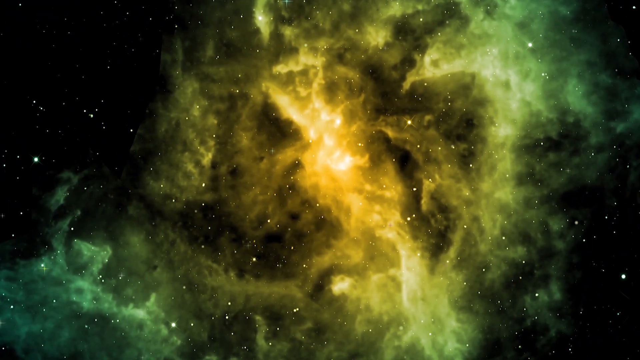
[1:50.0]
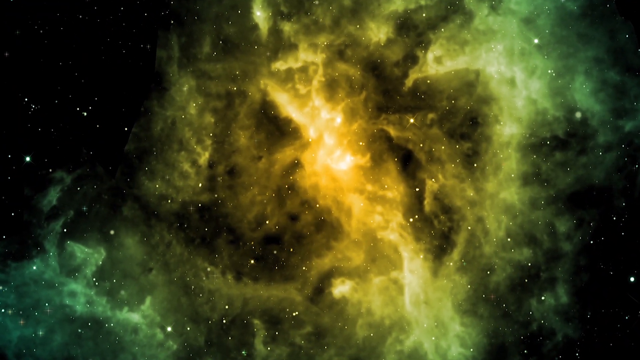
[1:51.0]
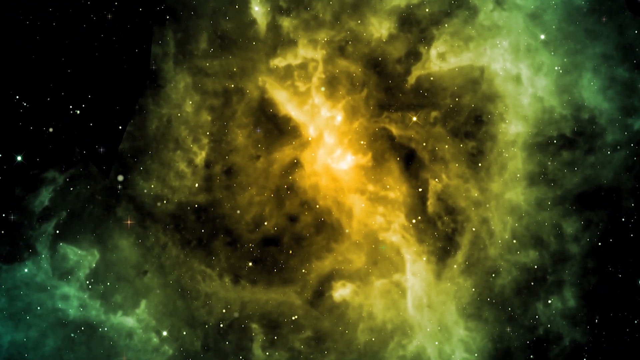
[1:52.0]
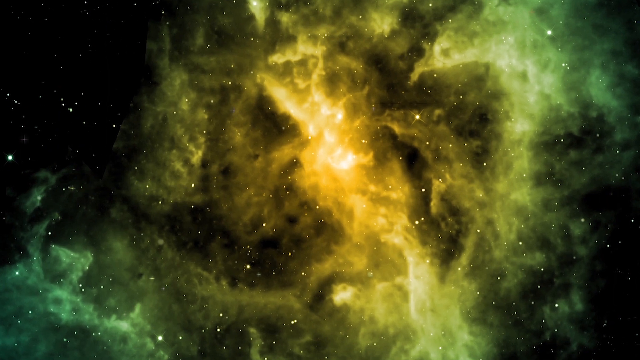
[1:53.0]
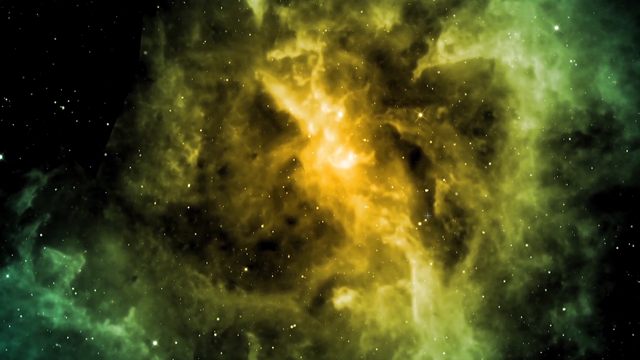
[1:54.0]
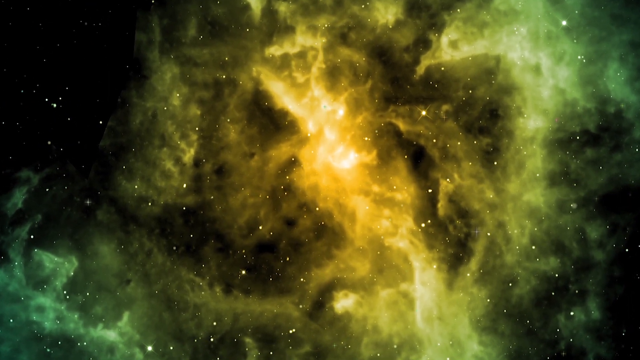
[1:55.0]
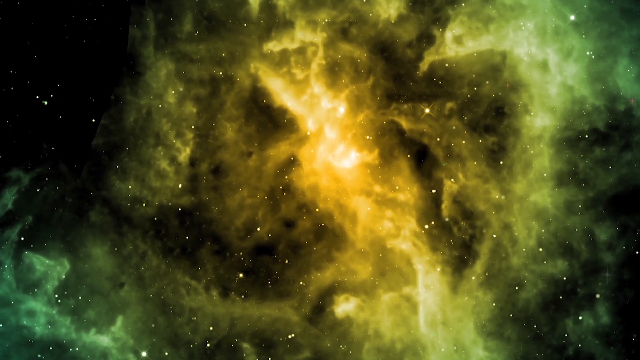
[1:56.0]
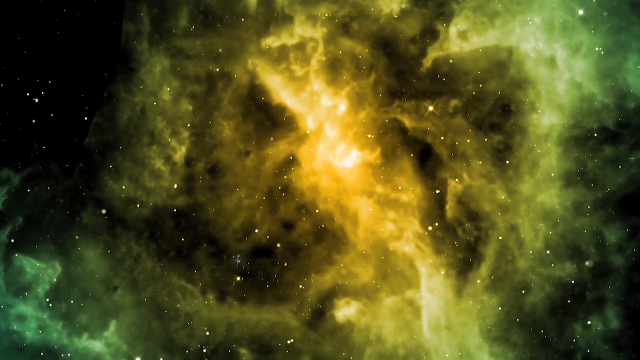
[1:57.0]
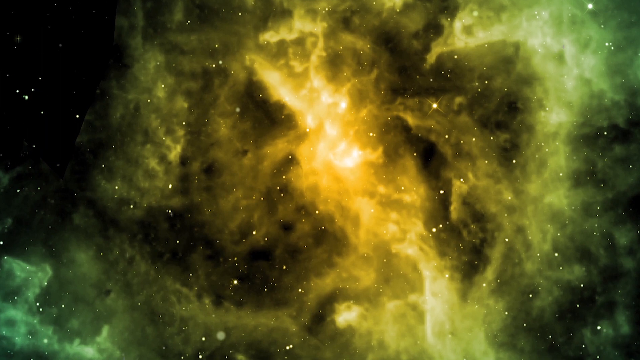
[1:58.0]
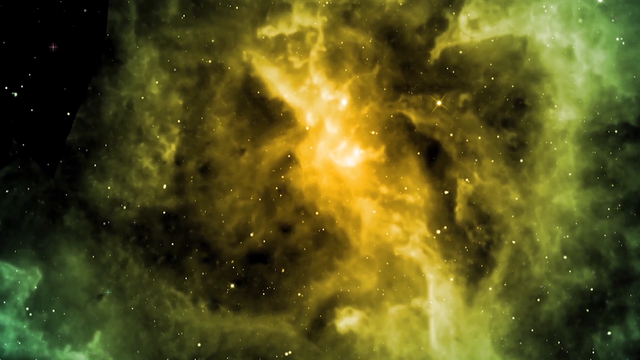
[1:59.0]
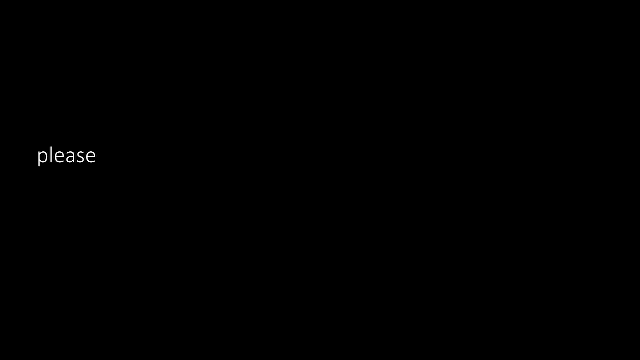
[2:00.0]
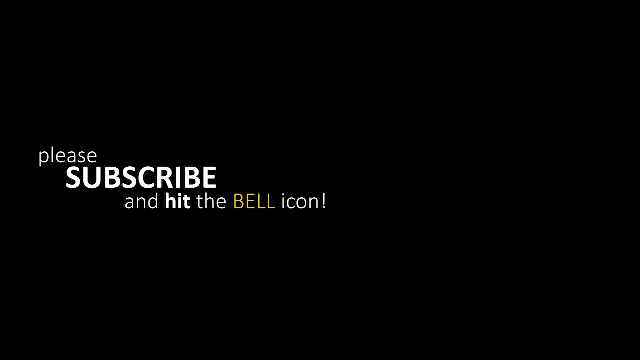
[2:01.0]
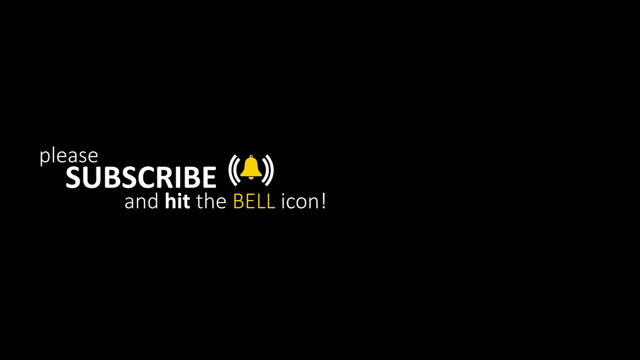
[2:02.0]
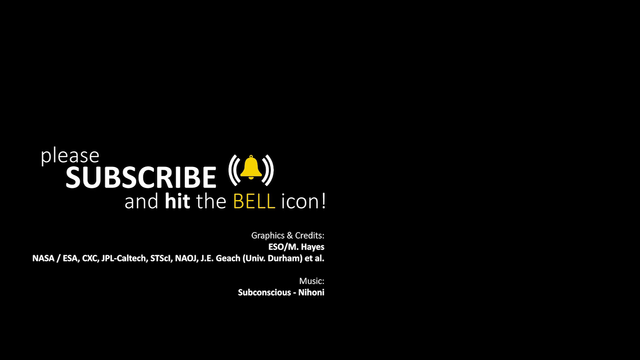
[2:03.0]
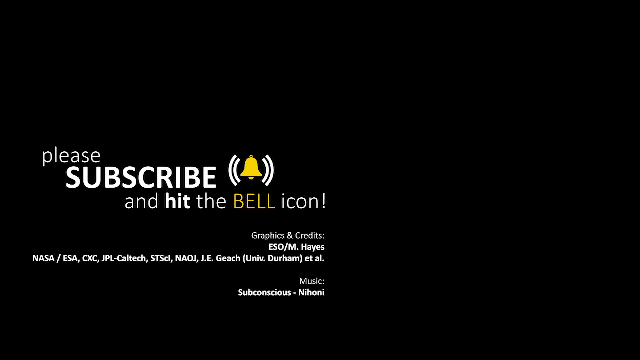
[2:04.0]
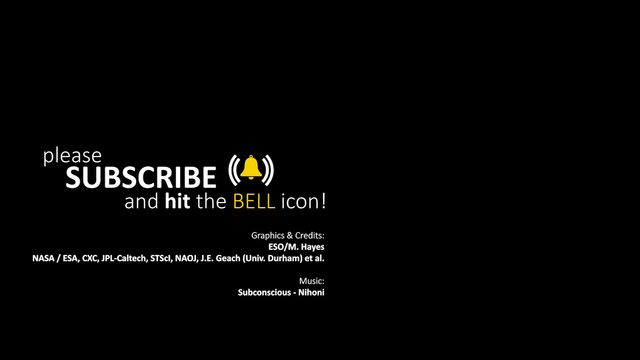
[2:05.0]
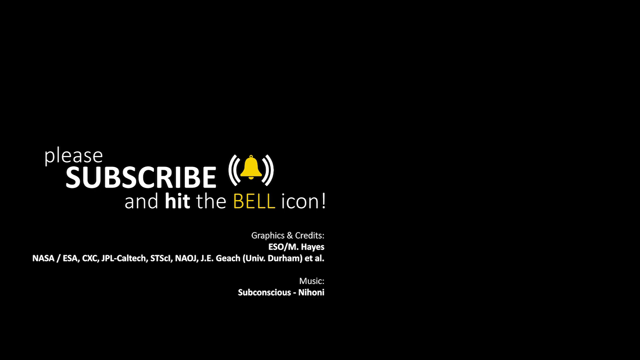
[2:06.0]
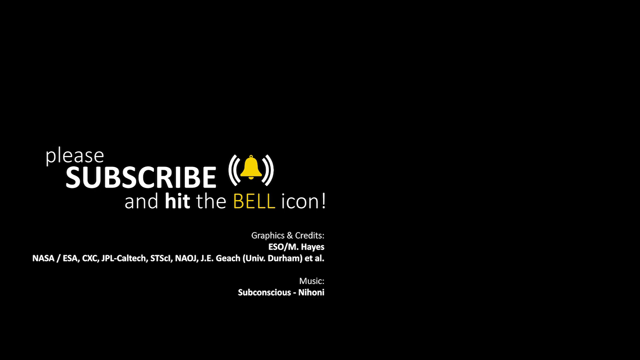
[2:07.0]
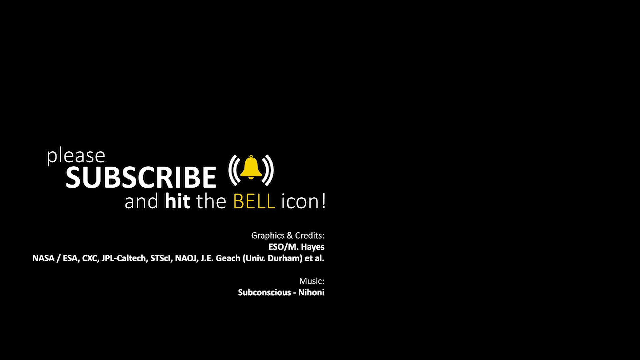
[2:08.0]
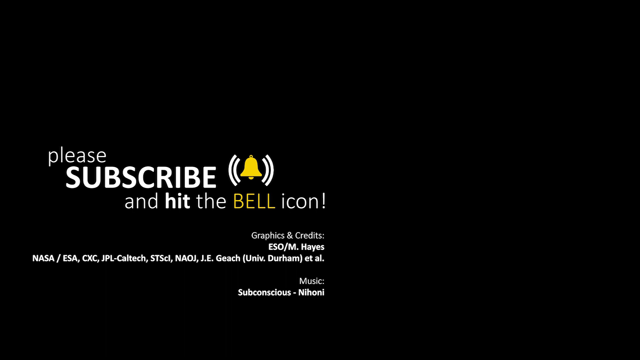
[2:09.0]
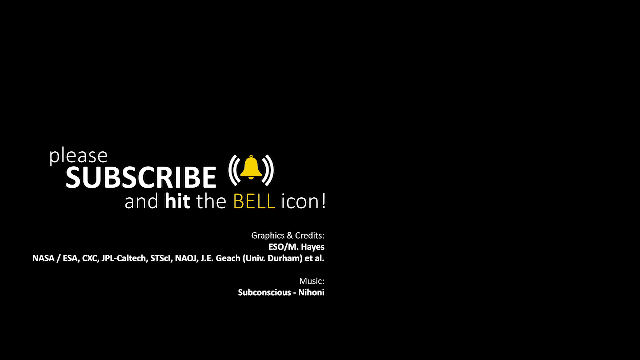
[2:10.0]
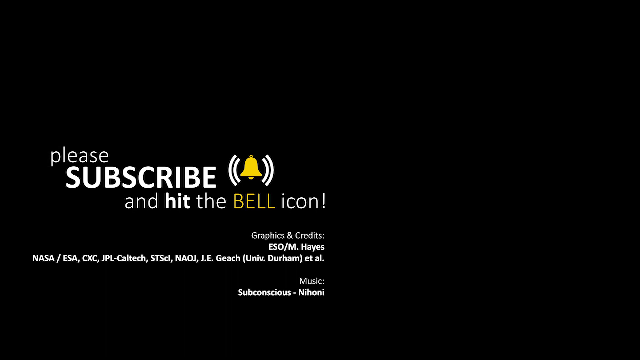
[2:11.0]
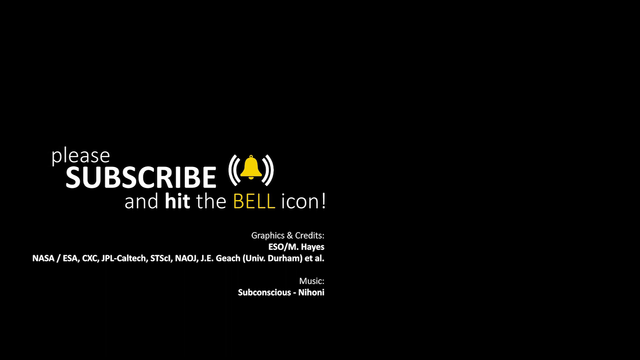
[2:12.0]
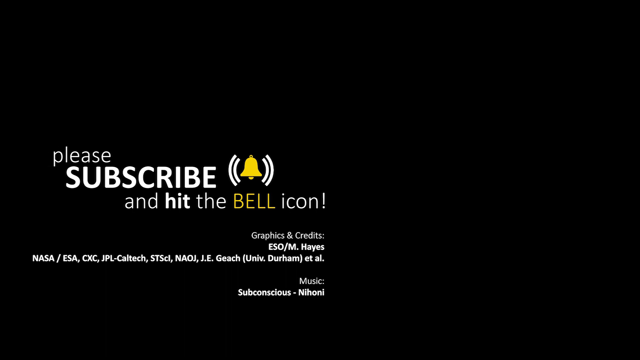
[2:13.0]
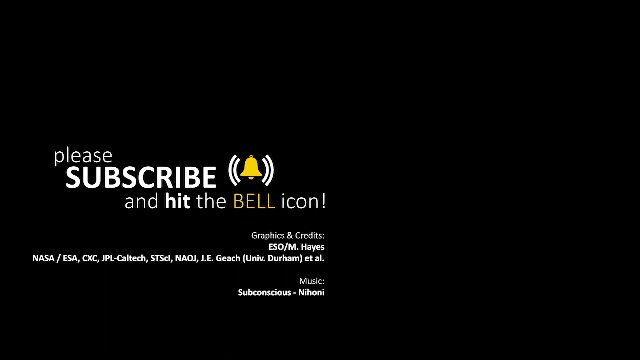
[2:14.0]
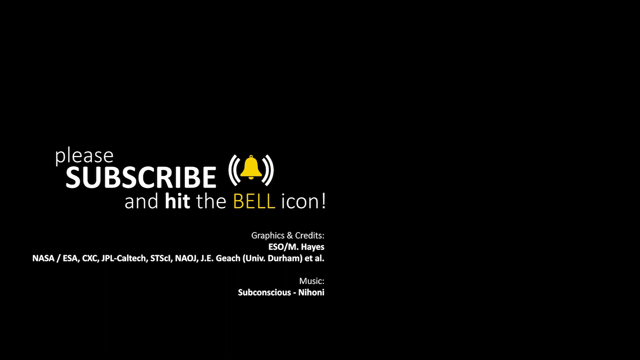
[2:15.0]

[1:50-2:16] The view flies through a yellow and green gaseous body, surrounded by almost turquoise, in the middle of a shot of a galaxy, with black space in front and an almost infinite number of white stars passing by. Then text appears reading "Please subscribe and hit the bell icon," with a drawing of a bell in two sets of parentheses next to it. In the bottom left corner of the black screen, credits read "Graphics and credits, ESO / MHaze, NASA / ESA, CXC, JPL-Caltech," continuing with further entries including "University Durham" and "et al.," followed by a music credit. At the very last second, the subscribe text disappears, leaving only the graphics and credits at the bottom.